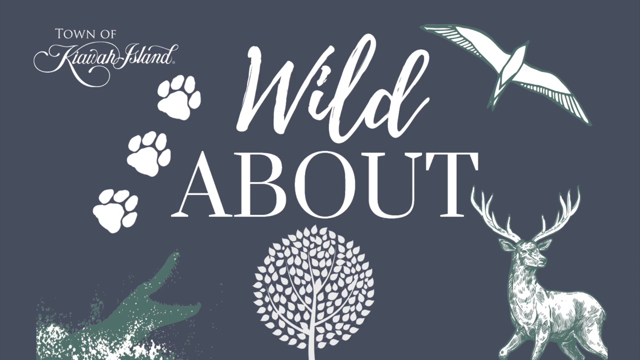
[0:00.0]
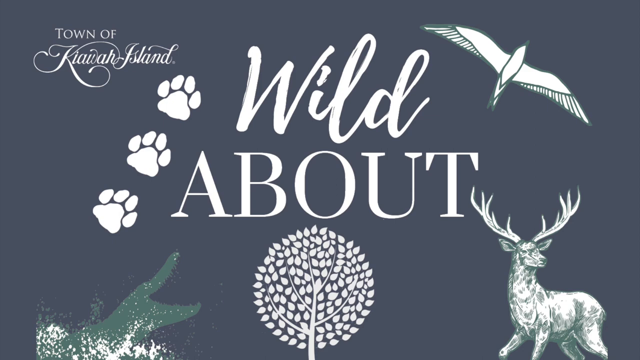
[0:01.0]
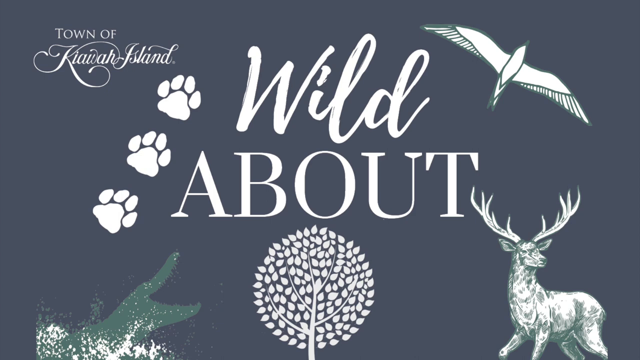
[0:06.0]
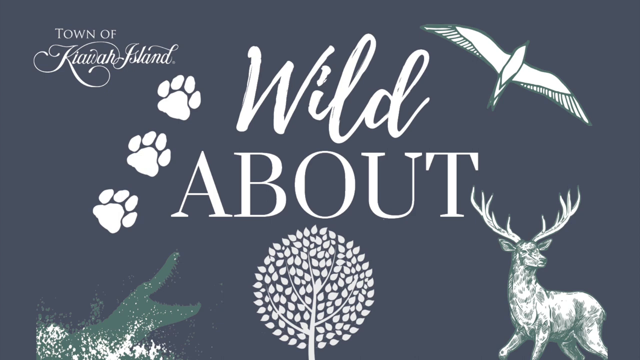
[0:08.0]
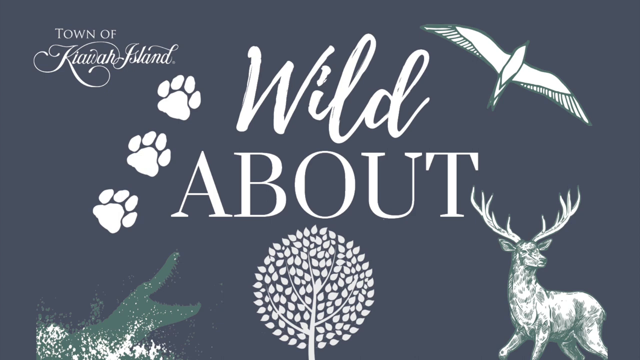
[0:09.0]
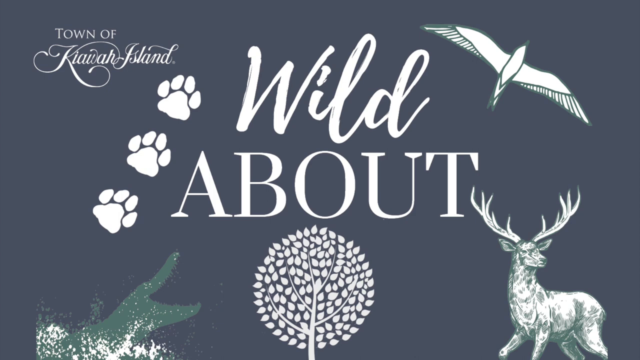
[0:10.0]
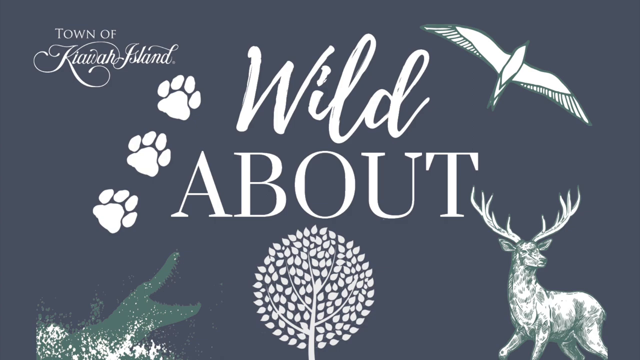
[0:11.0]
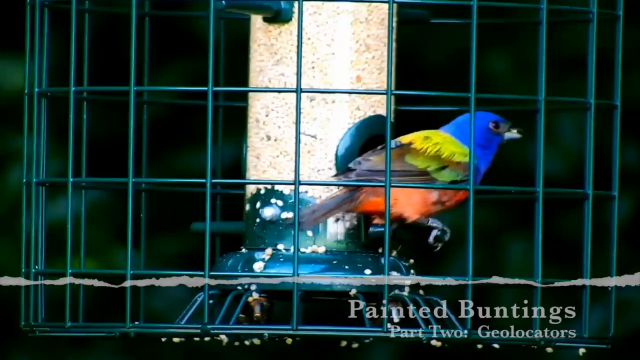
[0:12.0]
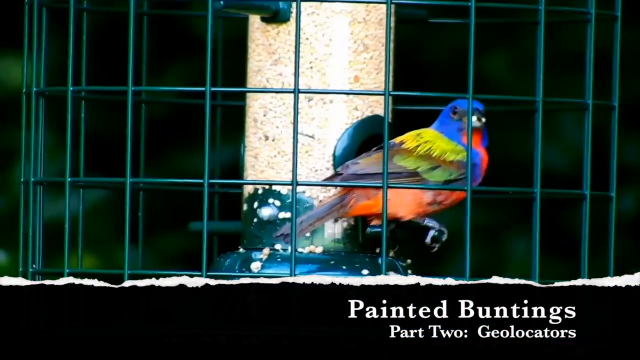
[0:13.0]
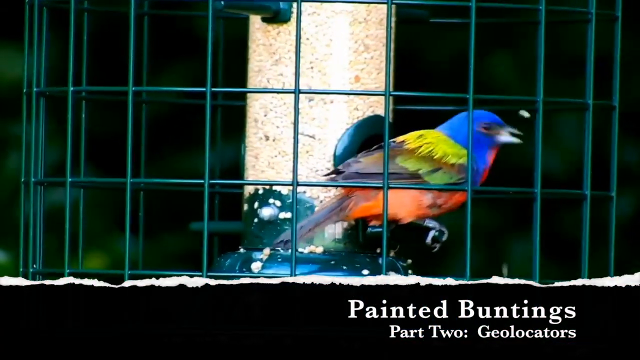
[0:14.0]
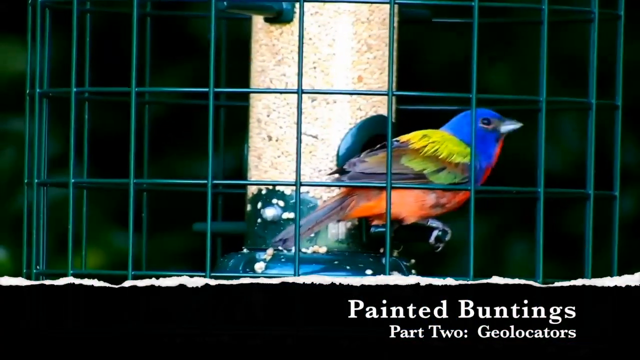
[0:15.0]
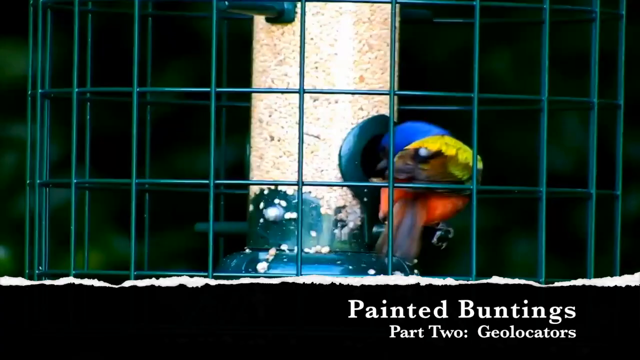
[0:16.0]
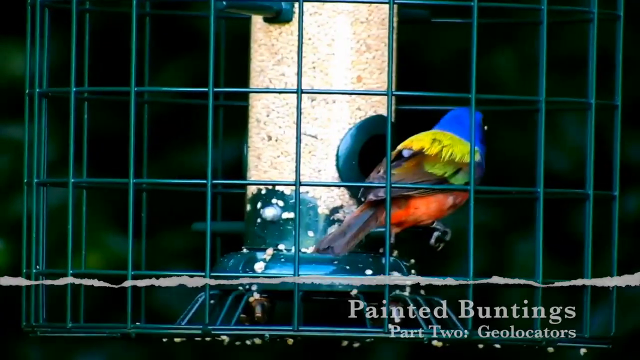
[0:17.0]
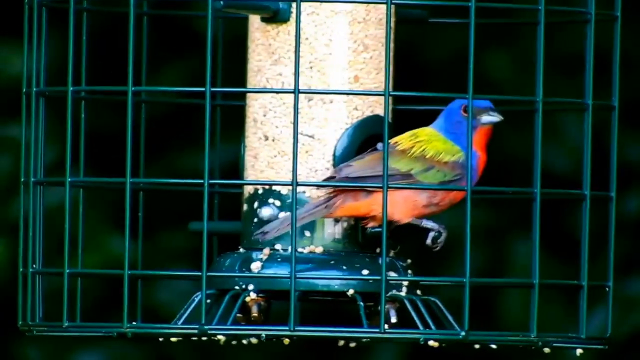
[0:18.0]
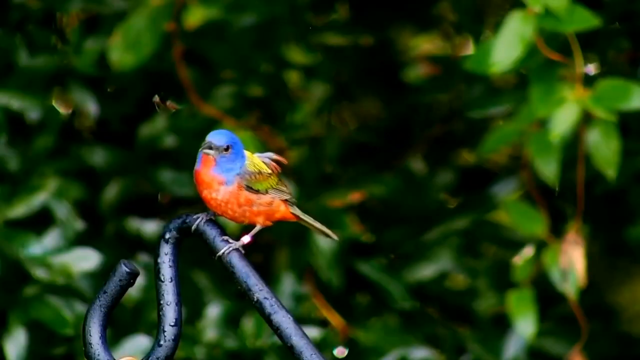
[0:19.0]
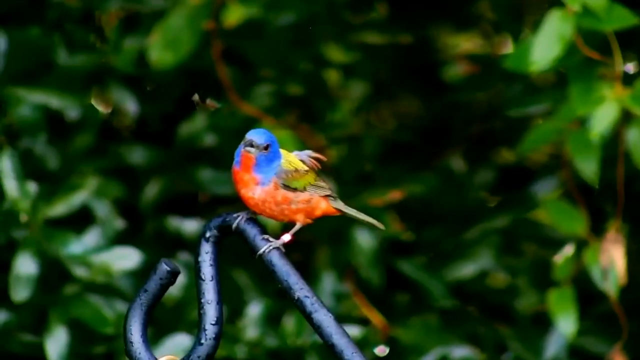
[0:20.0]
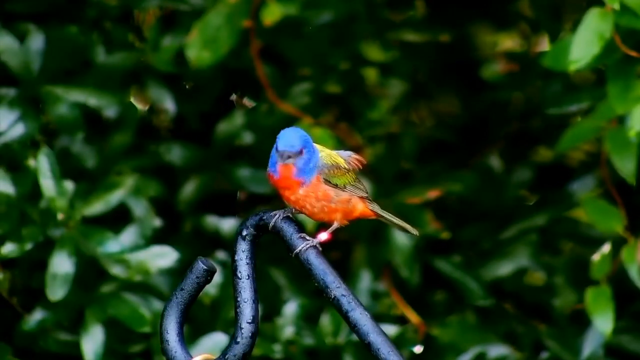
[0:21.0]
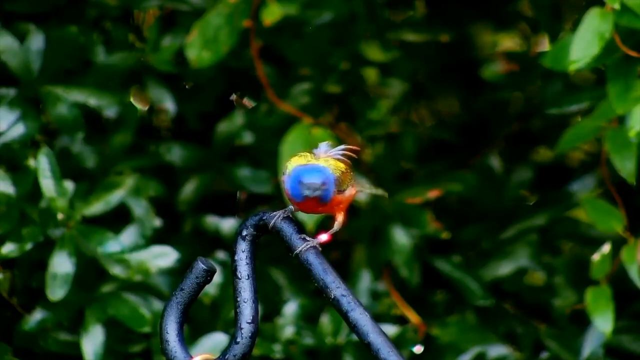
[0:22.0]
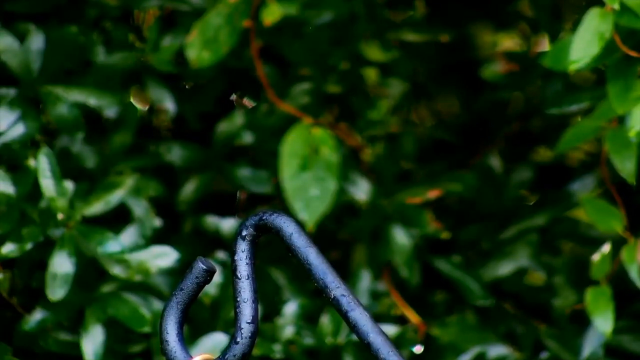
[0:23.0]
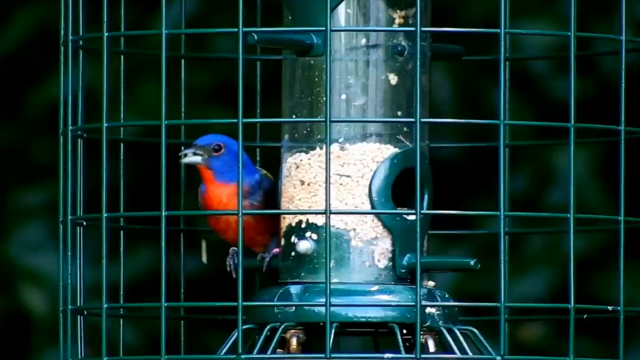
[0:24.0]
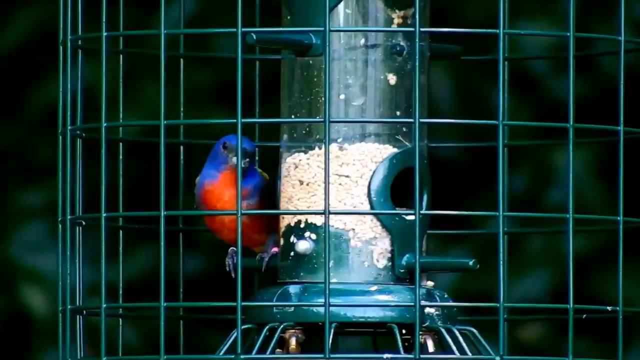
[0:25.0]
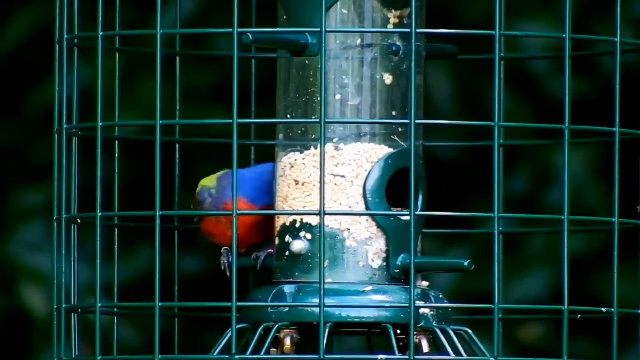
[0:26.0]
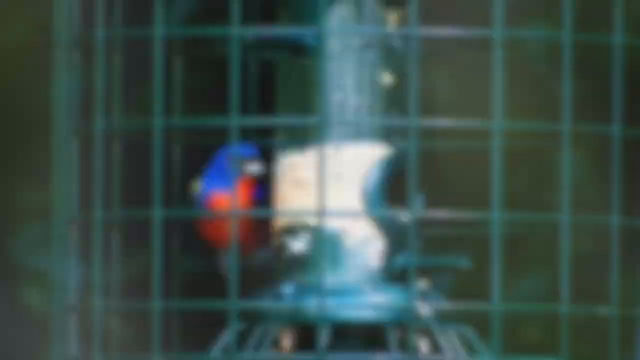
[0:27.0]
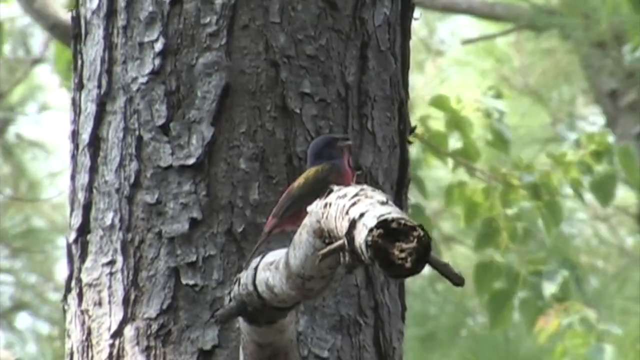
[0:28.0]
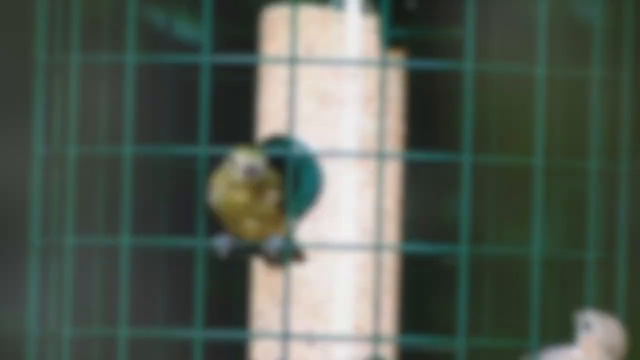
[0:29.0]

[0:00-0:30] The video begins with a pale grey background bearing a title in white; in the top left-hand corner, in white elegant writing, is "Town of Kiawah Island". Three white footprints go up towards this title. In the top right-hand corner is a white bird flying. In the bottom right-hand corner is a stag with antlers. In the centre at the bottom is a round tree-shaped logo, and in the far bottom left-hand corner is an alligator with its mouth open coming out of the water. The screen then changes to a colourful bird in a cage. It has a blue head, yellow, green and blue wings, and an orange body. A title underneath reads "Painted buntings part 2 geolocators". The bird is feeding at a seed feeder. Next the bird is outside the cage on a metal rod; it shakes and flies away. The bird is then back in the bird feeder, perched and eating seeds out of the feeder holes. Another bird appears on a tree branch; it is grey with slightly green and red wings and a pale red body. Then a green bird is at the seed feeder.